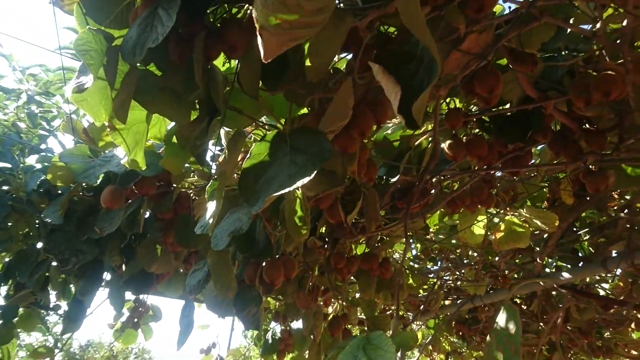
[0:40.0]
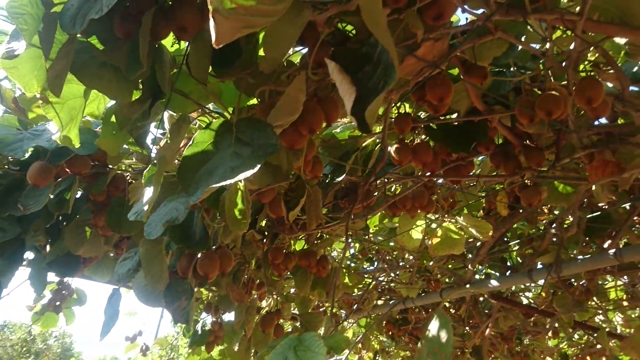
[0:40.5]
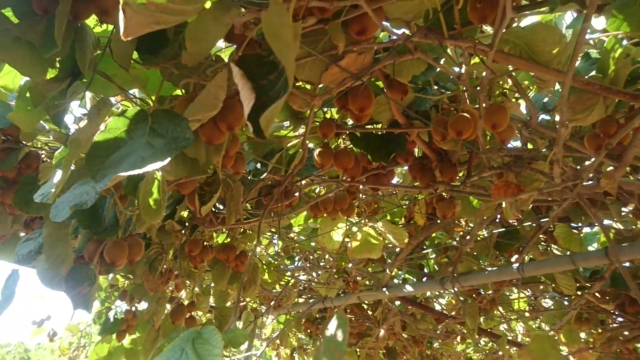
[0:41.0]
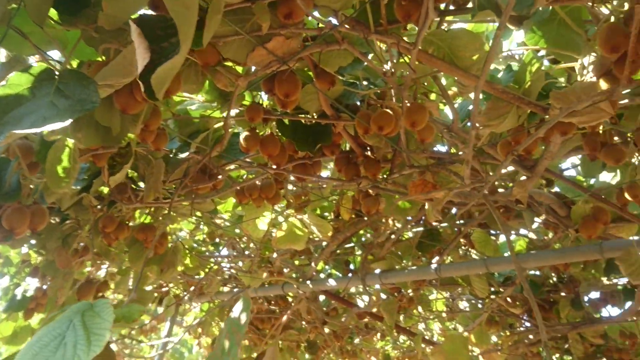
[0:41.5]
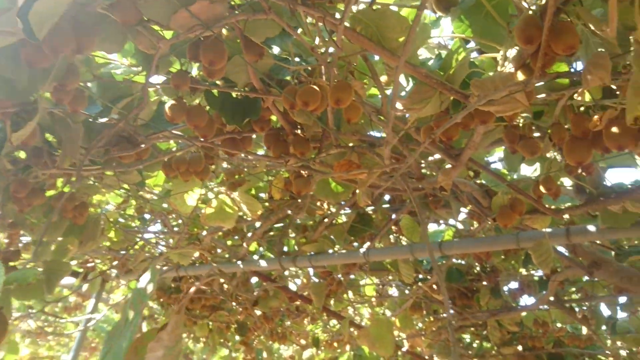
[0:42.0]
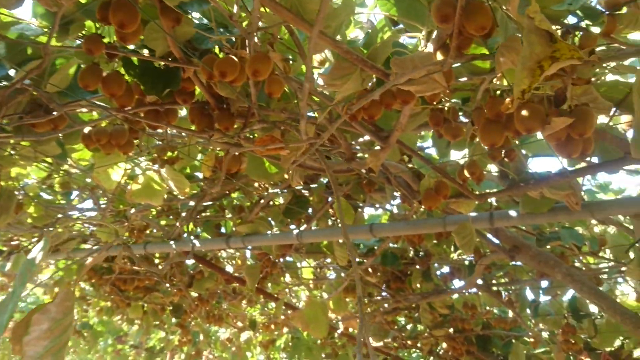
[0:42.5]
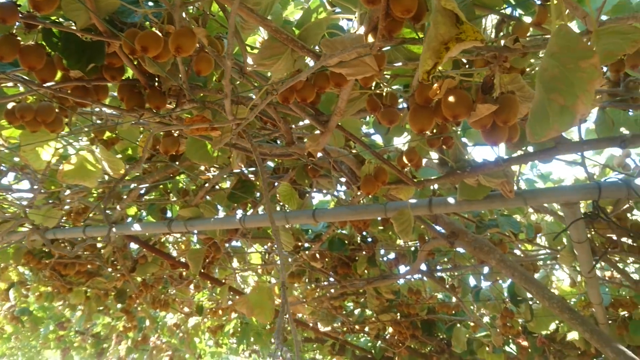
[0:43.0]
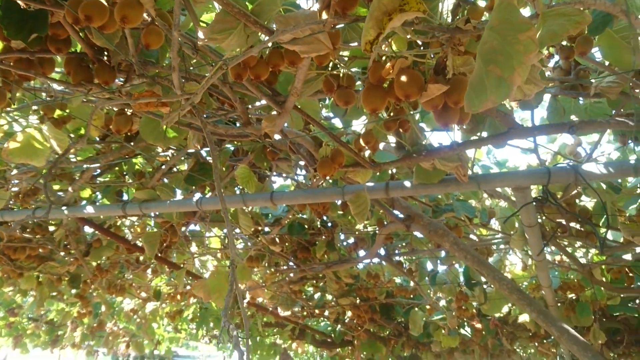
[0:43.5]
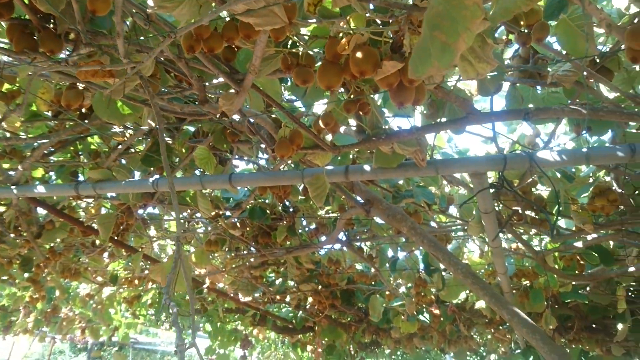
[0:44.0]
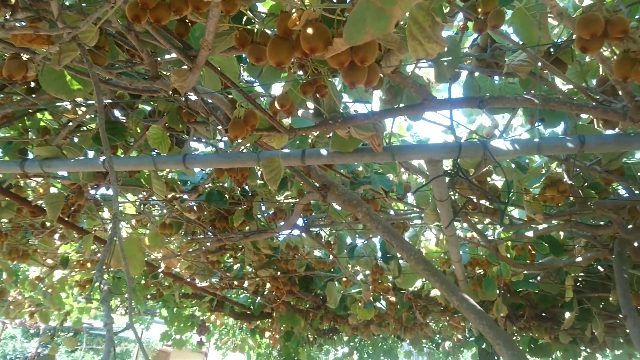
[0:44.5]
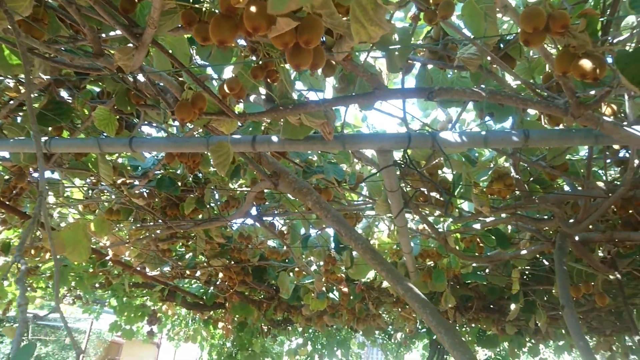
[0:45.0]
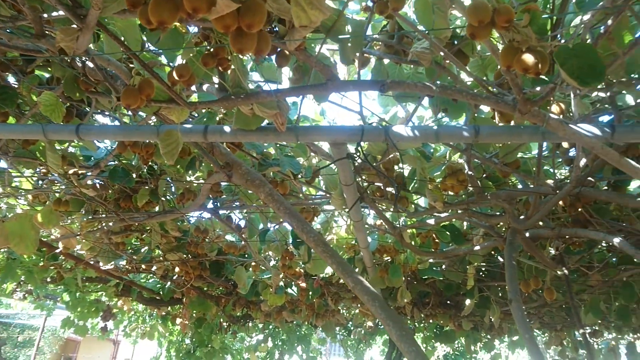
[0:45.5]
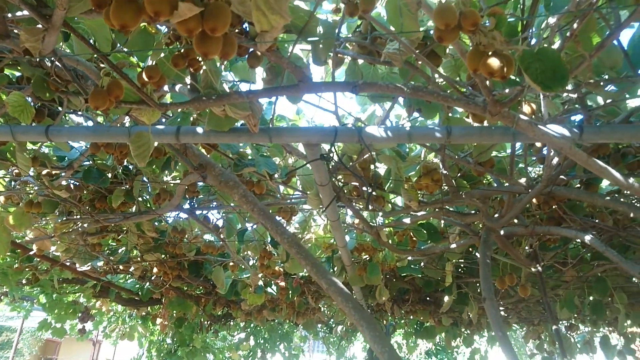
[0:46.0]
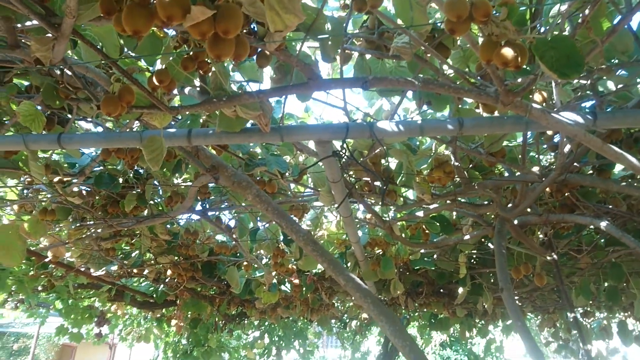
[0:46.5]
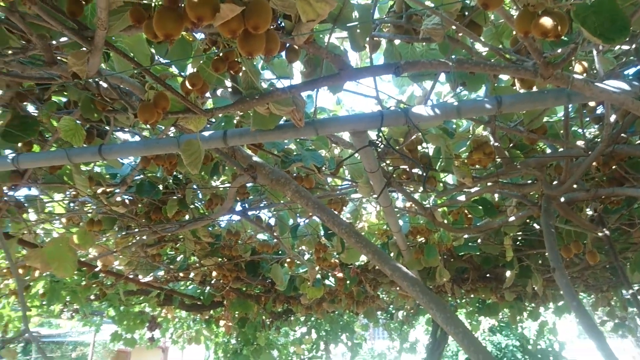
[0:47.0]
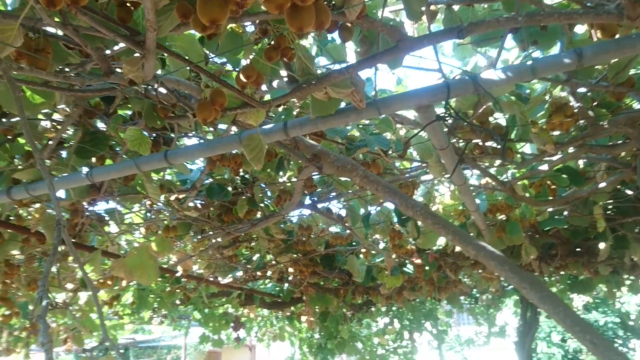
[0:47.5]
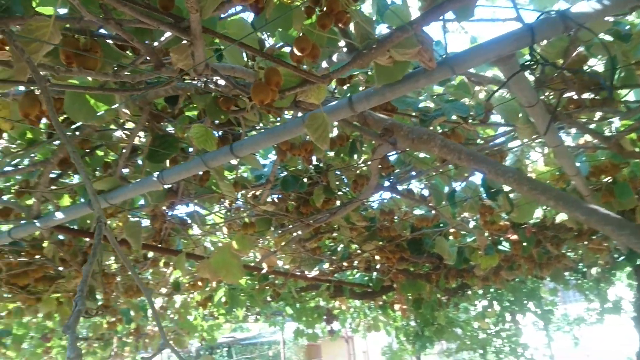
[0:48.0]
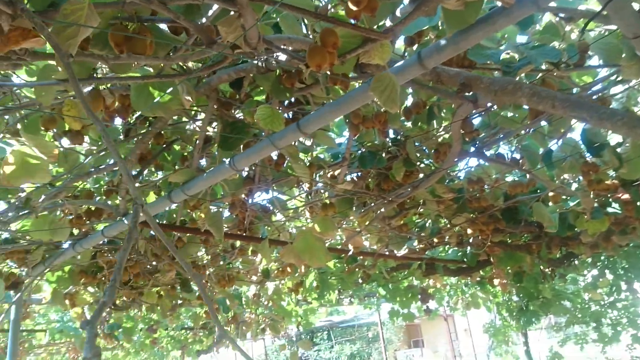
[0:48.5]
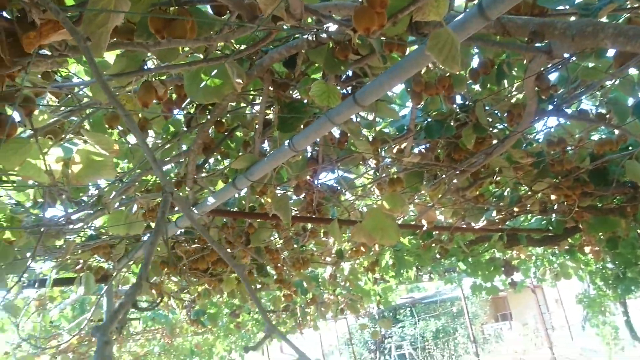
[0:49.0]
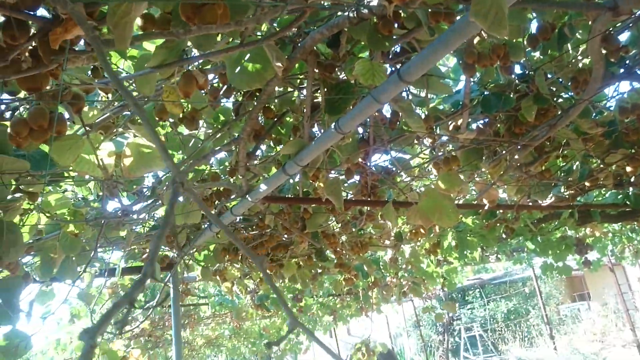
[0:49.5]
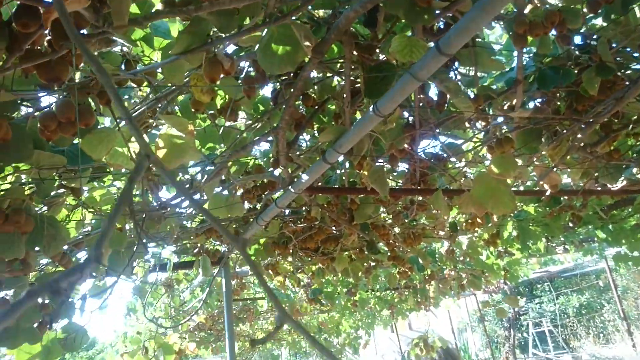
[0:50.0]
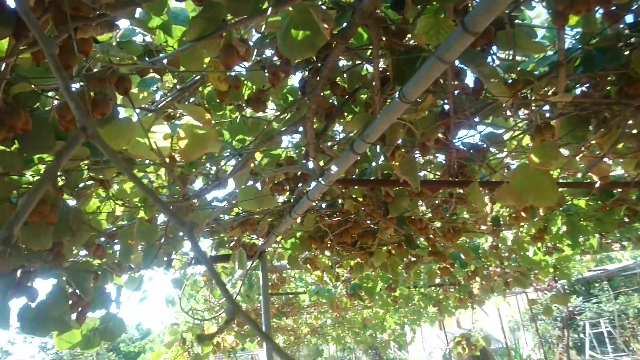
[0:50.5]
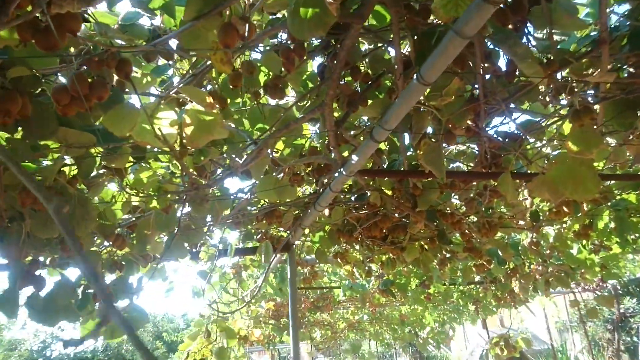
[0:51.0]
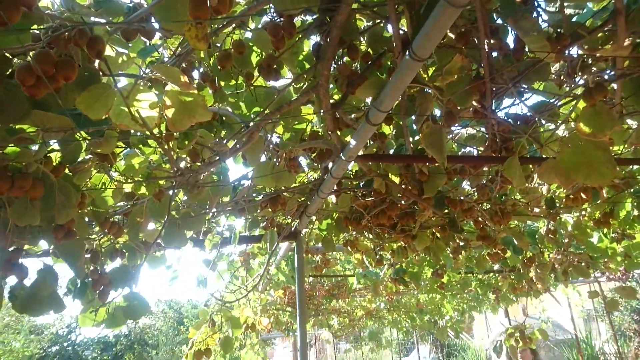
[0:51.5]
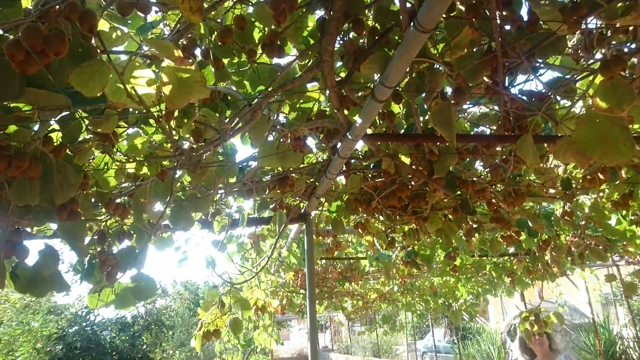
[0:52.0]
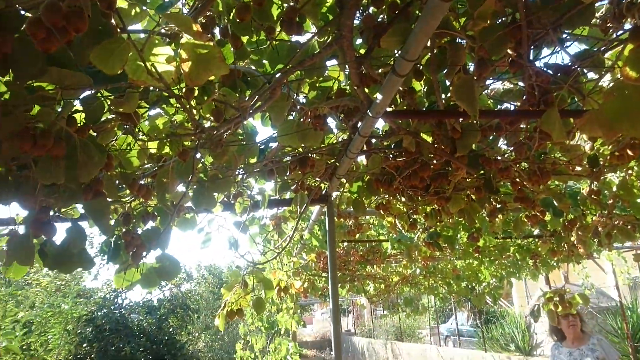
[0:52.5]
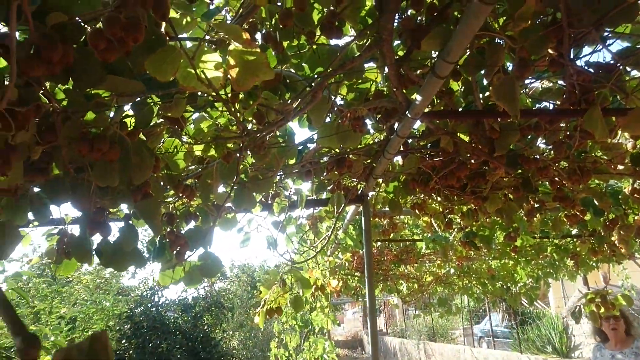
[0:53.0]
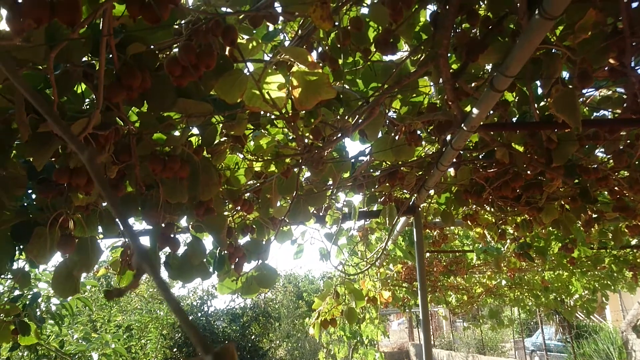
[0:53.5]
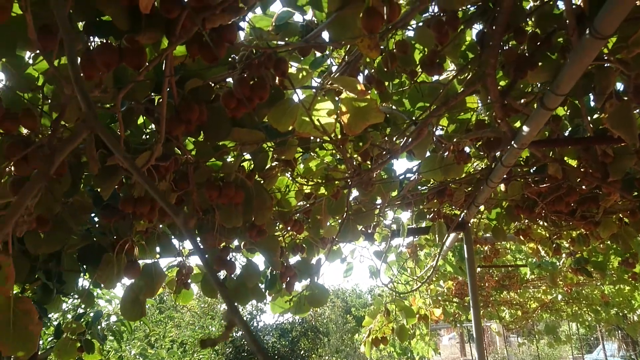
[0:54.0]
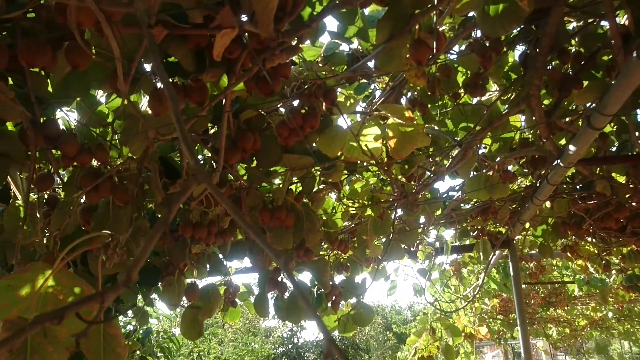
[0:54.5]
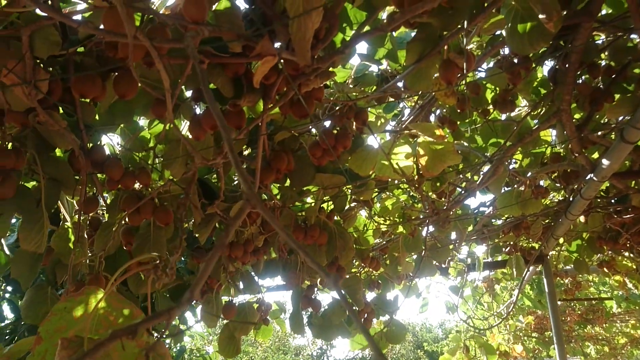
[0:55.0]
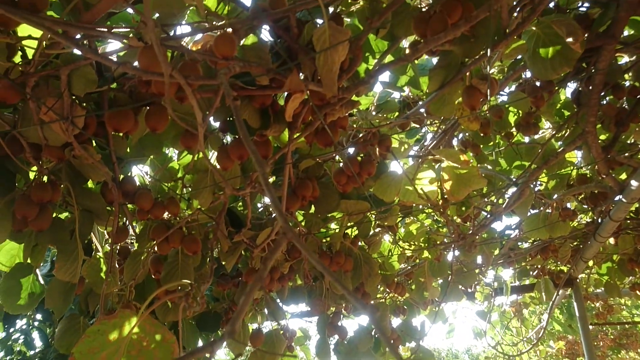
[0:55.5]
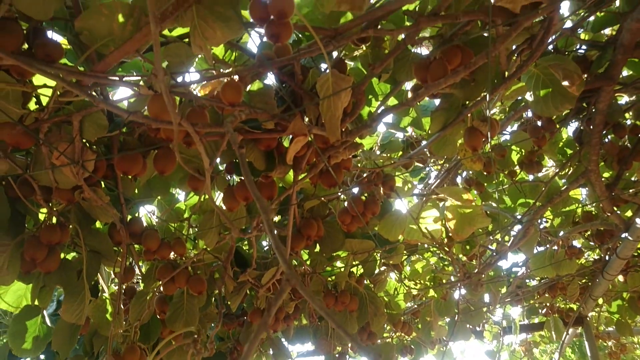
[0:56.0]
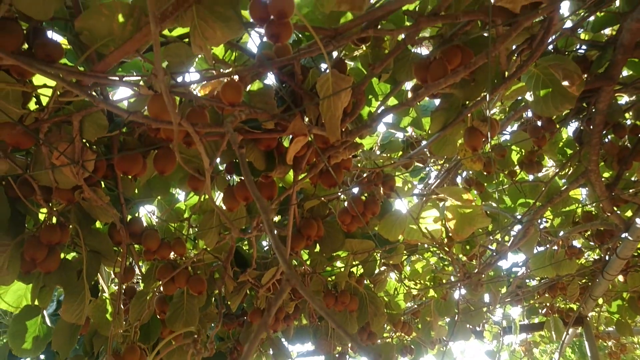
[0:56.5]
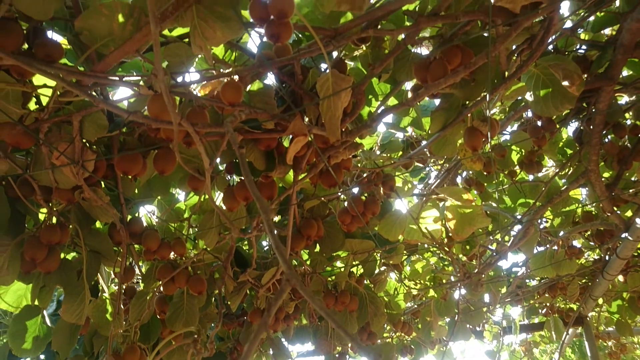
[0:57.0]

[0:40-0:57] The fruits hang downward, supported by bamboo sticks and a wire system. There are many of the same fruits, which appear to be light brown. Between them and the green leaves, the sky is visible, light blue and very bright. The camera mostly focuses upward on the fruits and the green leaves, showing the bamboo sticks and wires of the support system keeping the leaves and fruits up. Many branches are growing out around the bamboo and wire support system. The sky is light blue and the sun is very bright. The camera looks upward throughout this scene, continuing to focus on the green leaves and the hanging fruit.